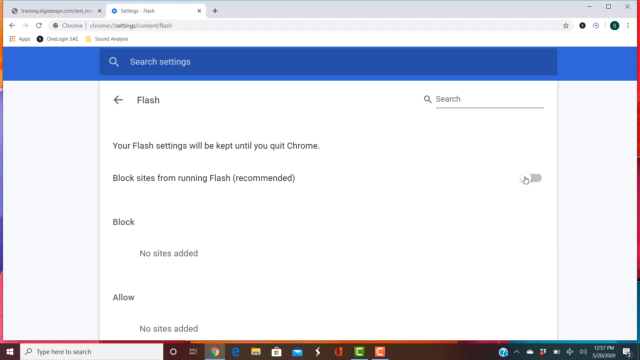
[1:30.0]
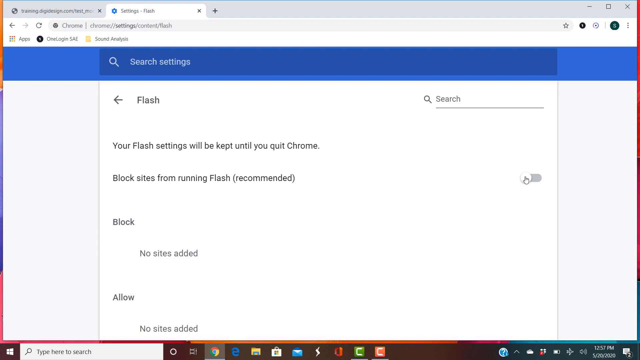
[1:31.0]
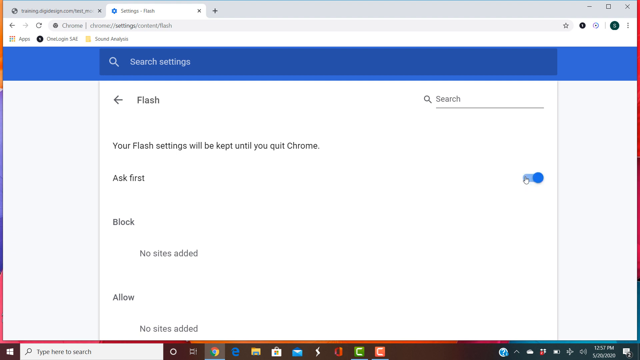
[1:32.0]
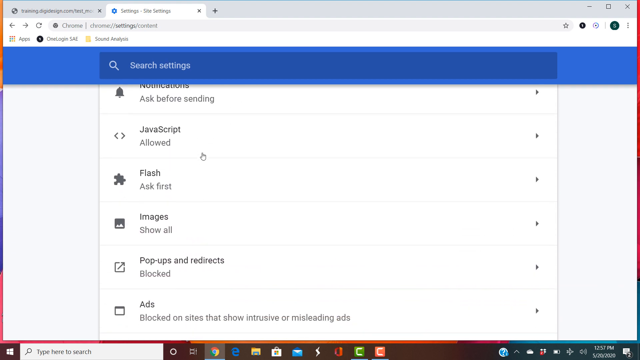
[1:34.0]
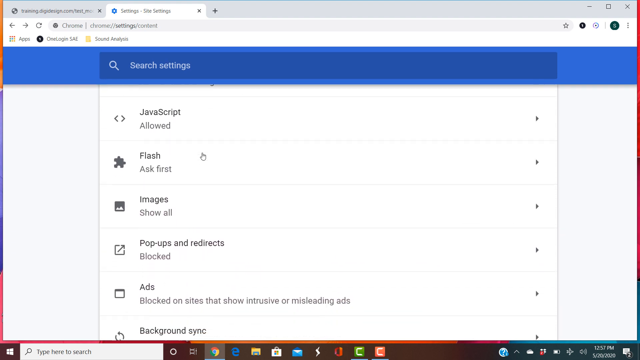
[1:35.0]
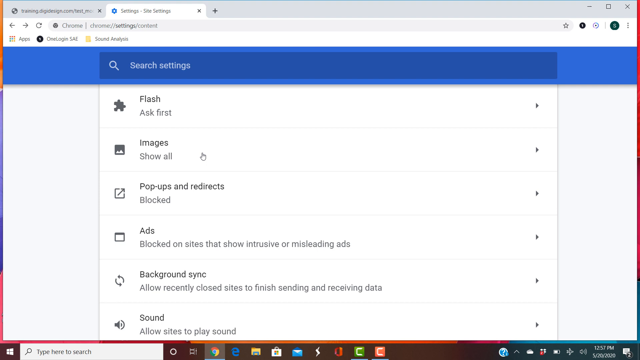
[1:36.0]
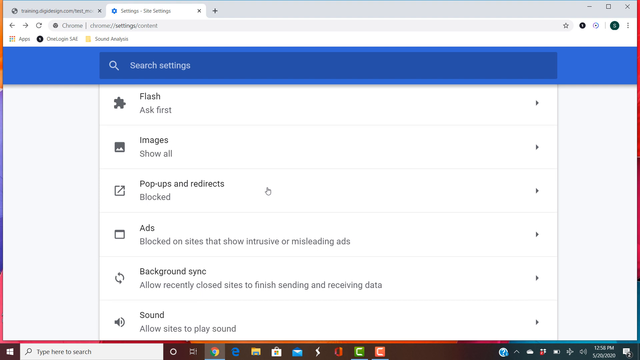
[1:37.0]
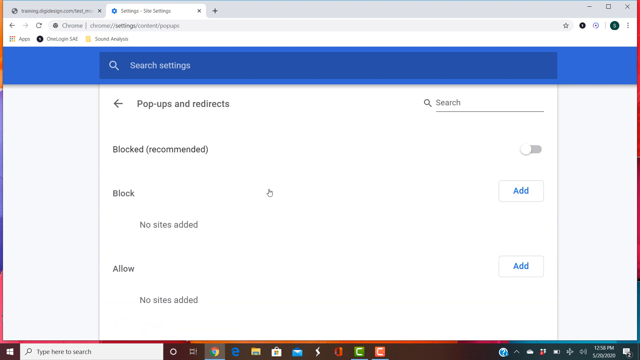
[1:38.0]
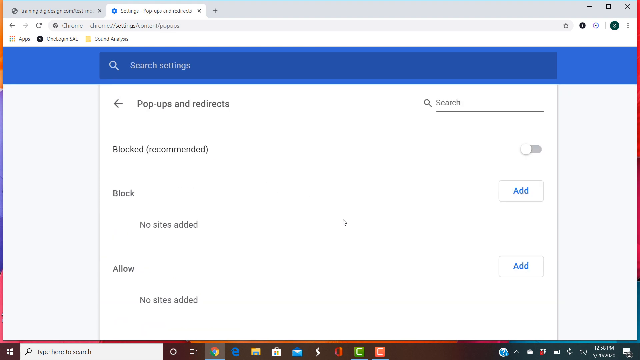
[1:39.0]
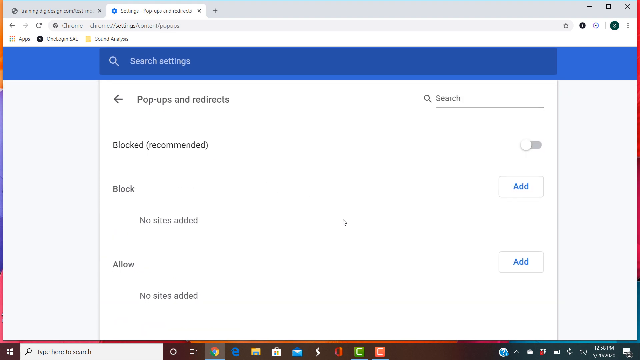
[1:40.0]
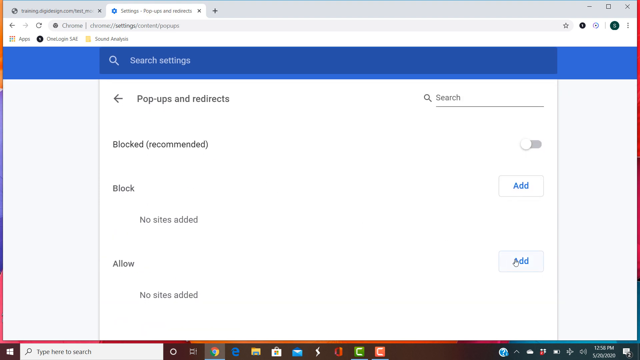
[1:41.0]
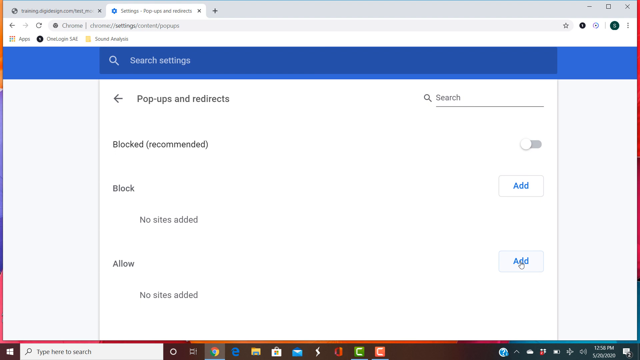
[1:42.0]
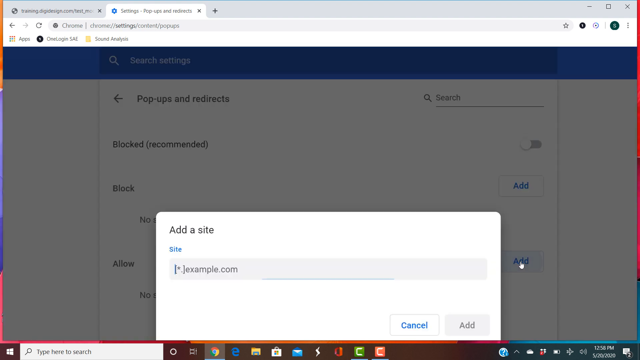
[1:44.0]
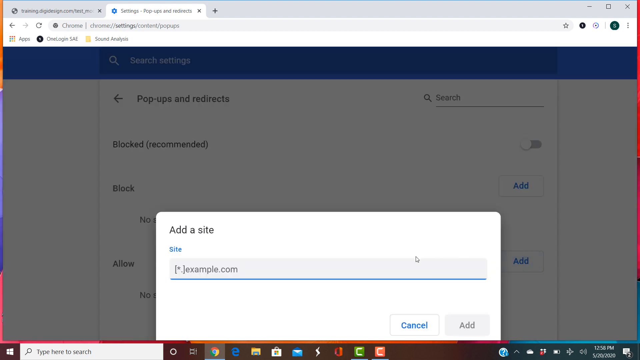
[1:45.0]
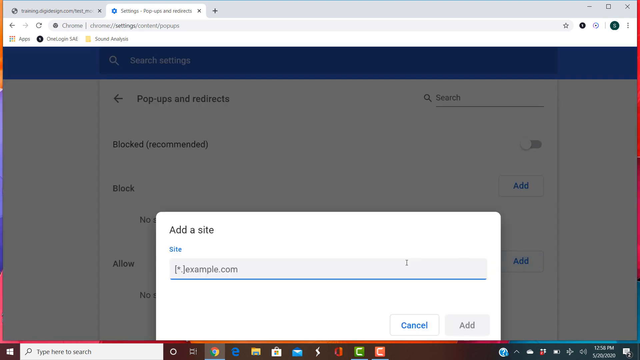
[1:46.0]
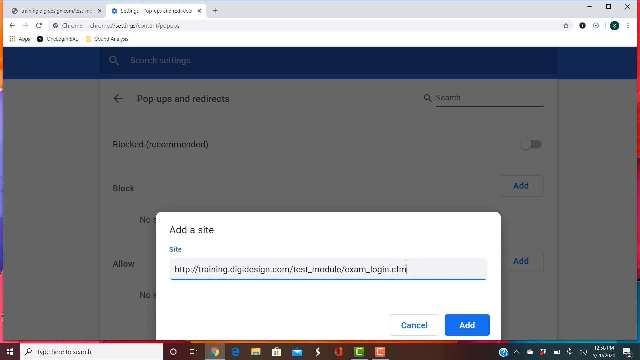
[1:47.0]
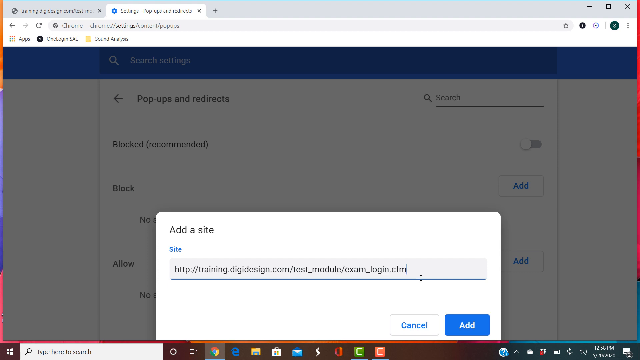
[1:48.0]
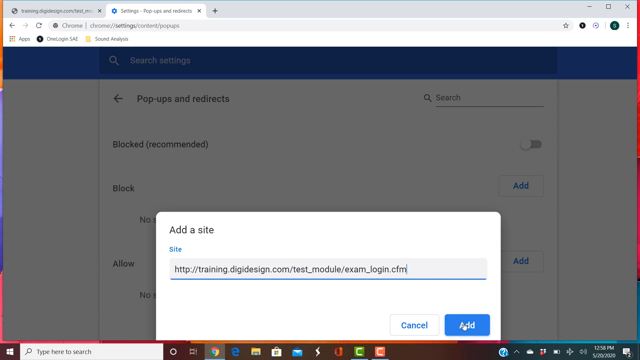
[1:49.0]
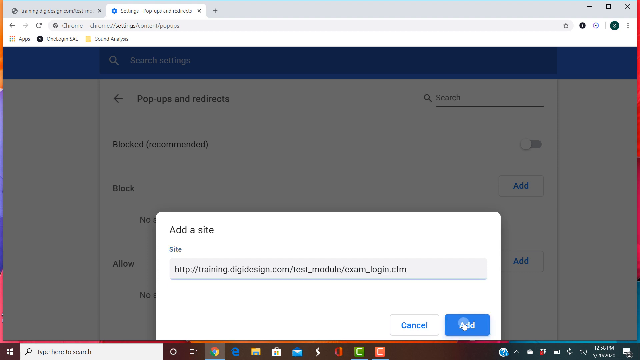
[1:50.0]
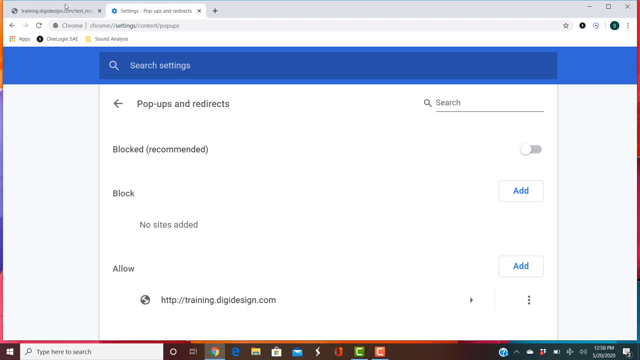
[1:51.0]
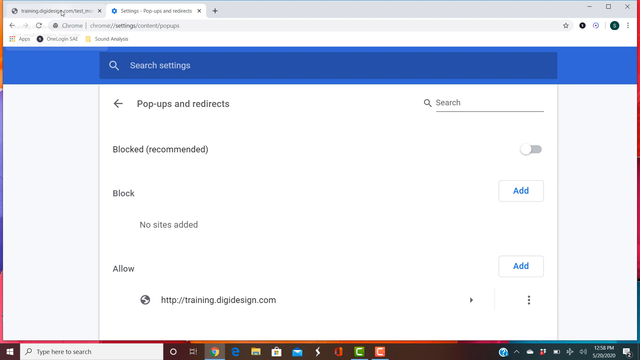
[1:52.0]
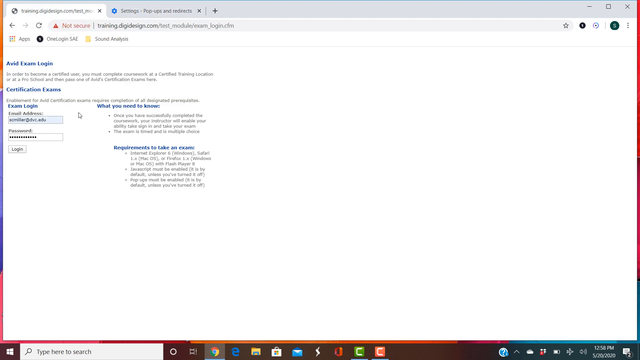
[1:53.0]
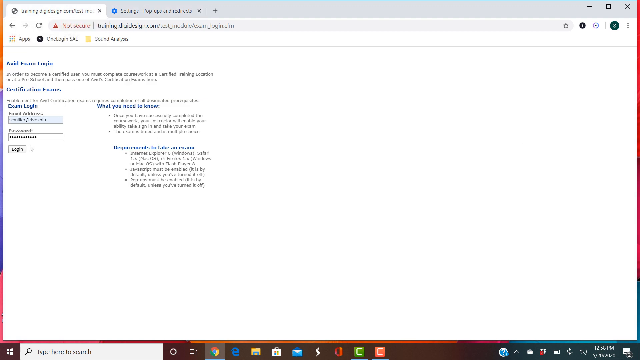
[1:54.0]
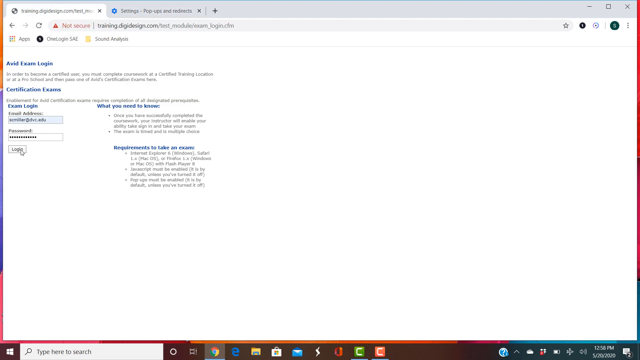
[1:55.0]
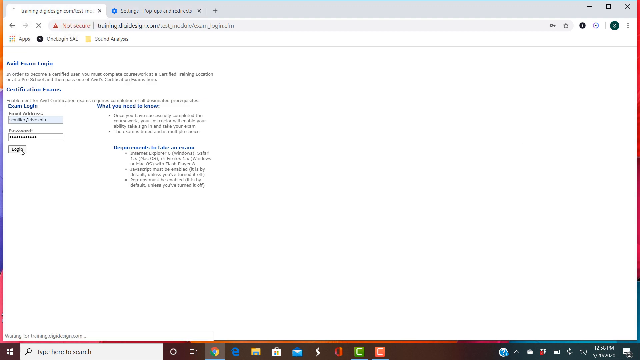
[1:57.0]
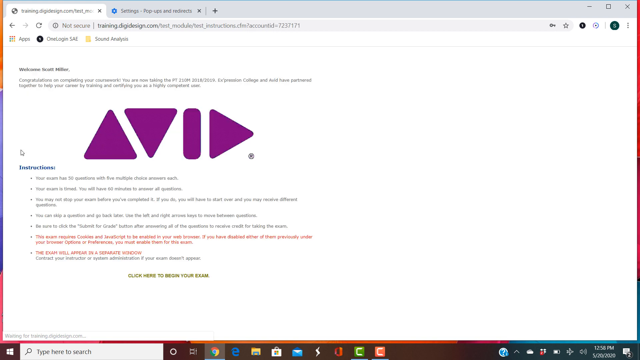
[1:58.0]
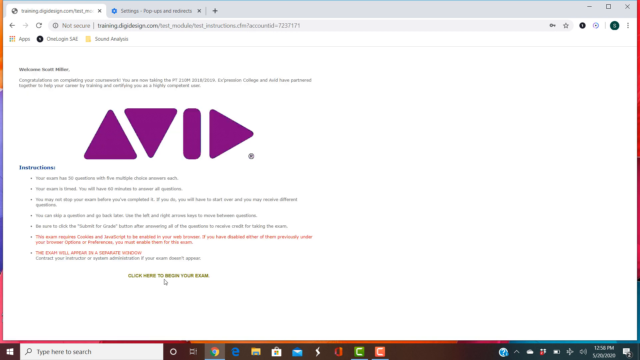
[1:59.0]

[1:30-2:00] Google Chrome has the website open, with content written on it, and the Chrome settings for customizing permissions for a site are also open. The mouse changes the flash setting for the site. Options to block sites, ask first and allow are chosen among. In the pop-ups setting, the status shows that pop-ups are blocked. The user enters the web address of the site that should be allowed to show pop-ups.